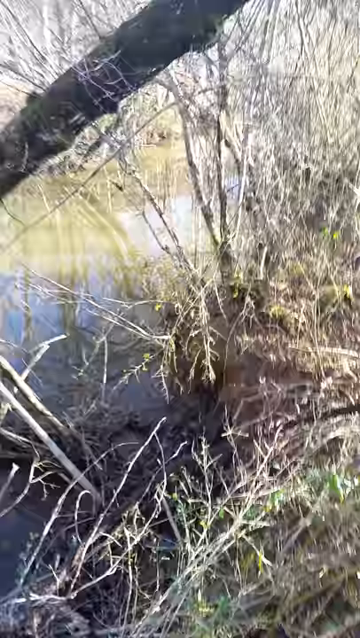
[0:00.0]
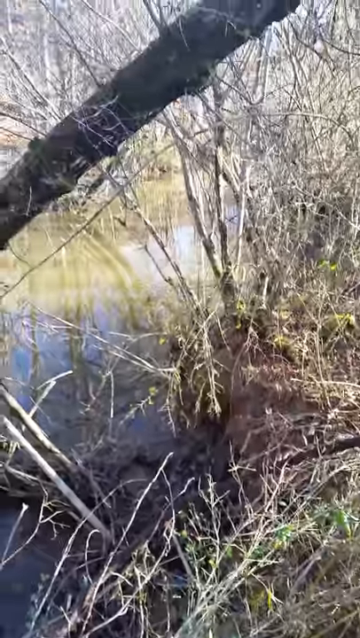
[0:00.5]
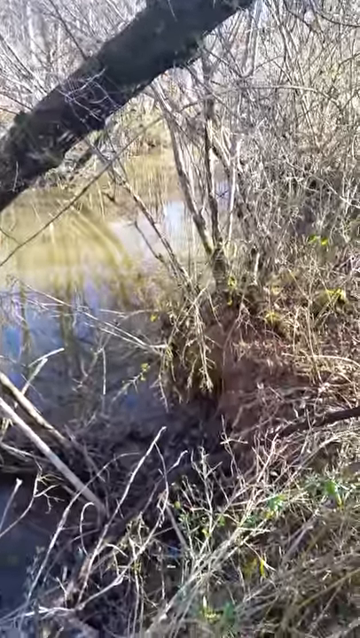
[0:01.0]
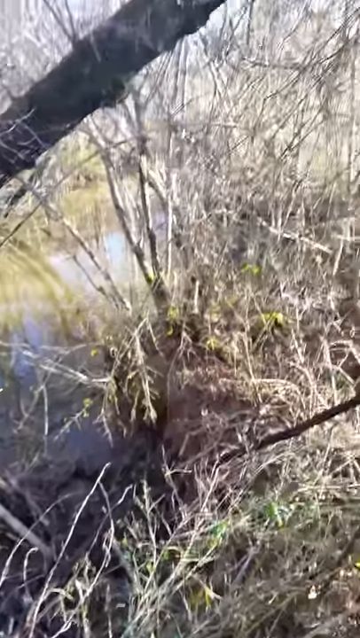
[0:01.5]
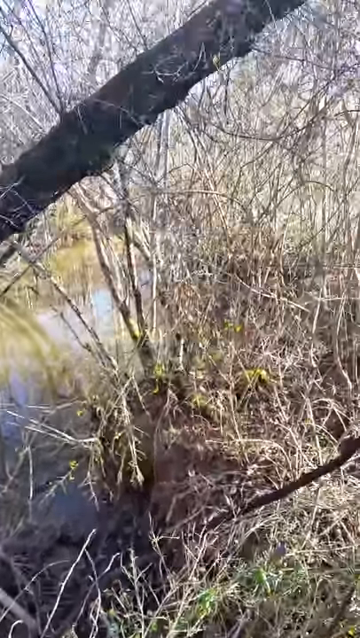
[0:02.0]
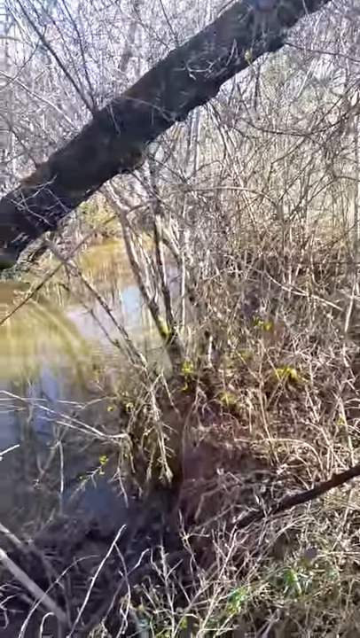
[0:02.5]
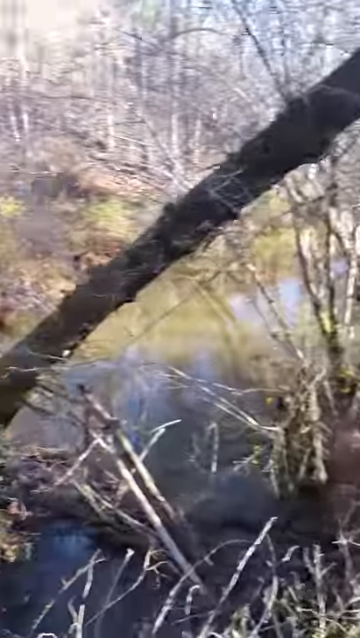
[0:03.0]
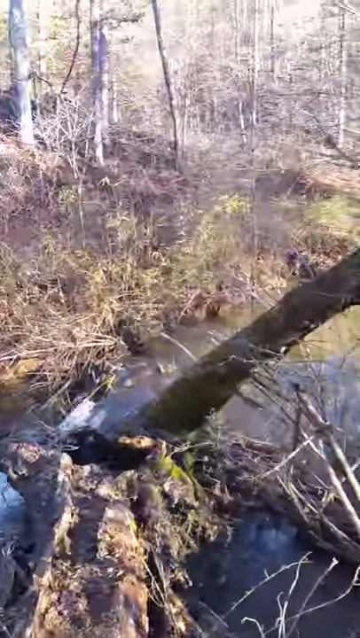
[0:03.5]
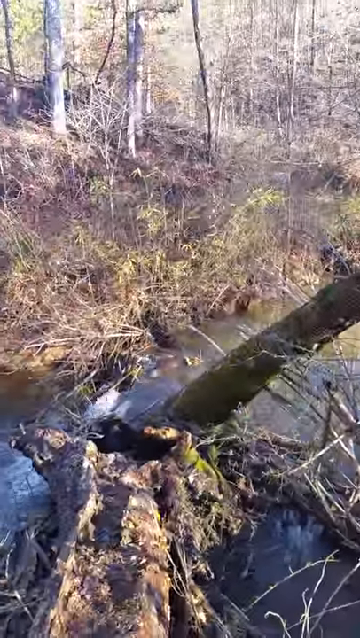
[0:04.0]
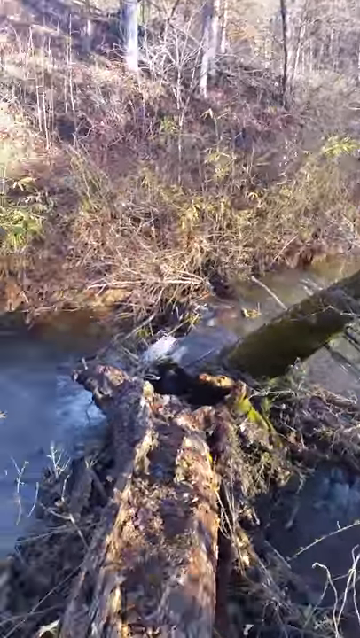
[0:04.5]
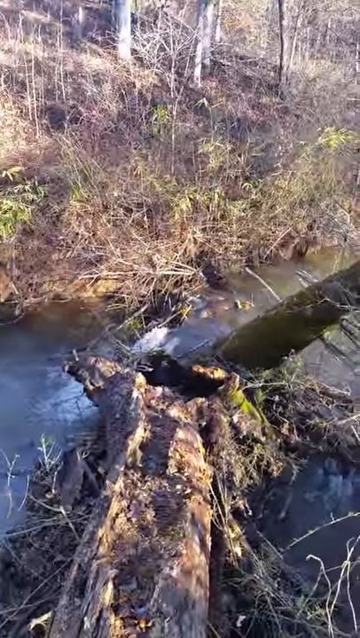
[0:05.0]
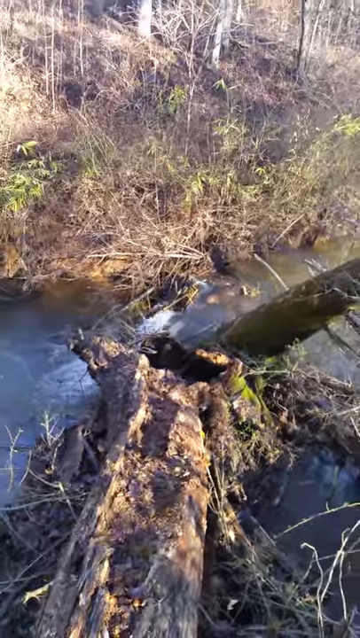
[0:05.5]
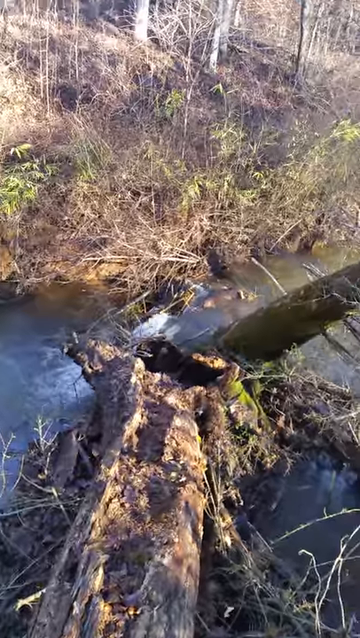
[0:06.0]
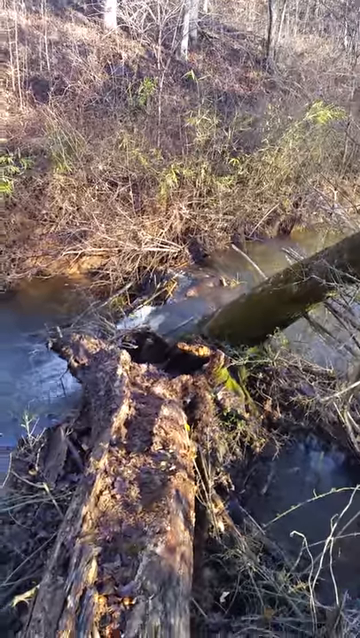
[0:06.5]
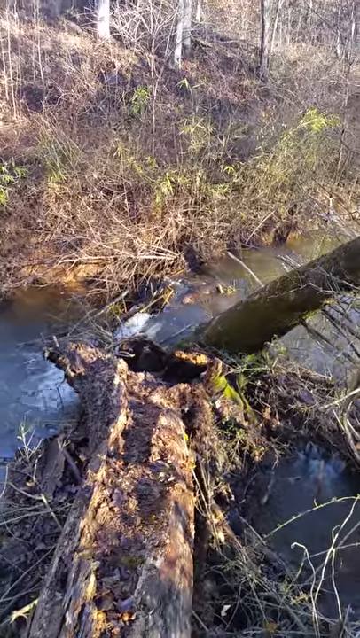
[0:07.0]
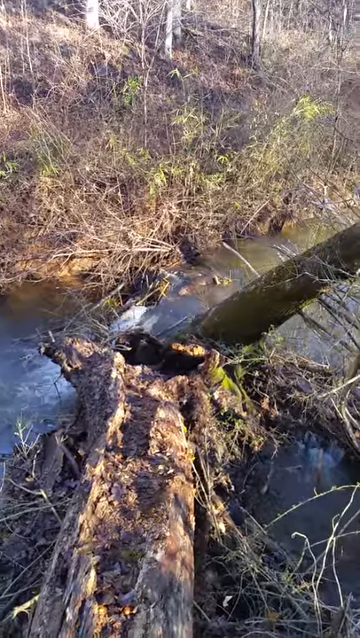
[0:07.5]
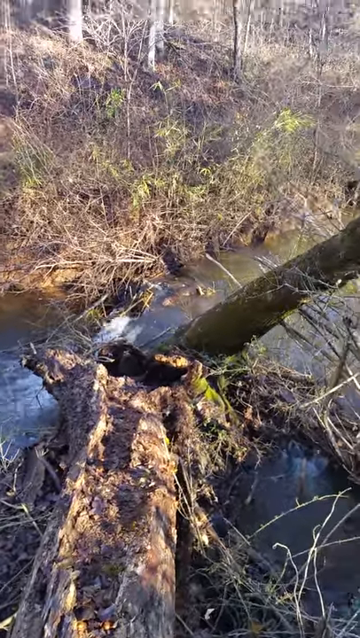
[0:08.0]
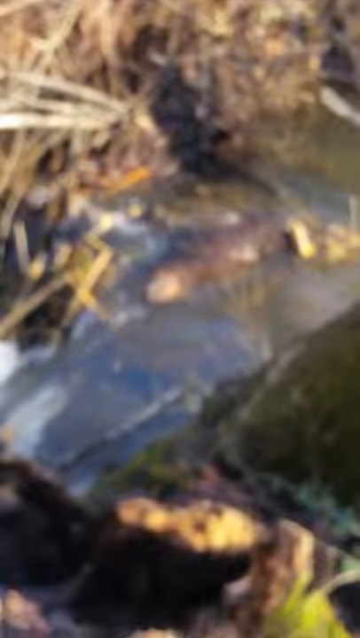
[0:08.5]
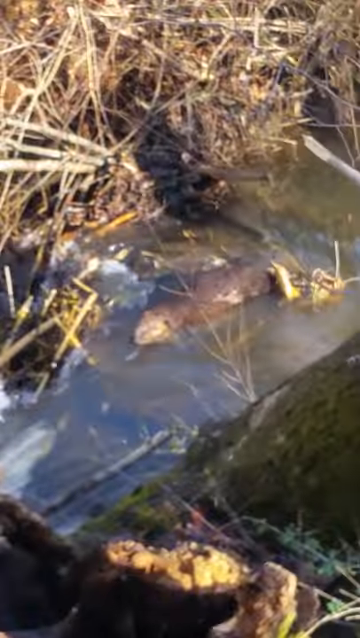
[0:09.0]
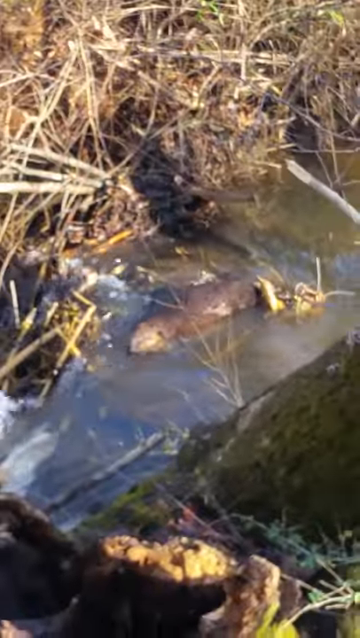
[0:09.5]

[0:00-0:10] A natural setting shows a tree along with bushes, some logs, a stream running through the area, and grass in the background. No people are shown. A tree appears to grow straight out of the stream. At the very end, the camera apparently zooms in on a creature that may possibly be a beaver.